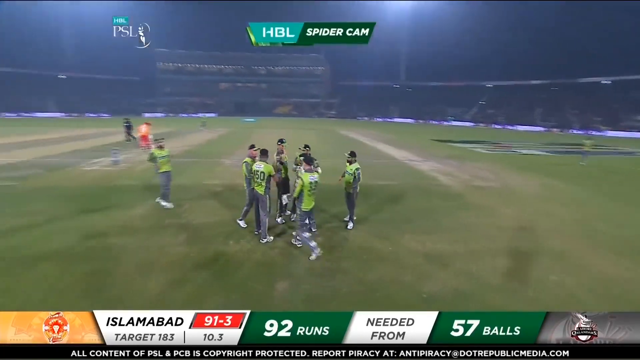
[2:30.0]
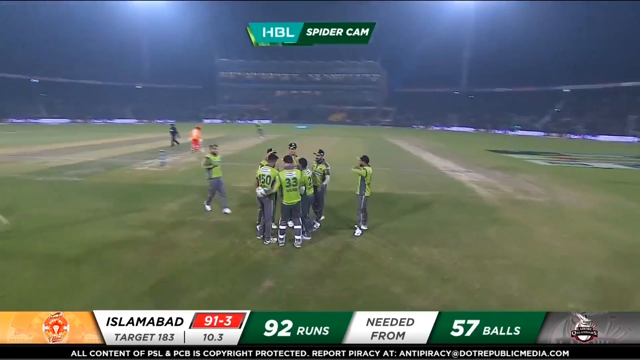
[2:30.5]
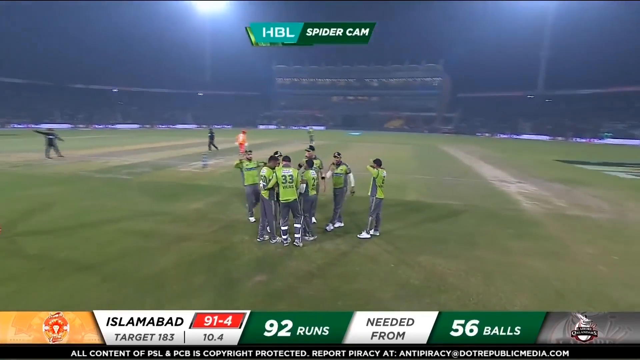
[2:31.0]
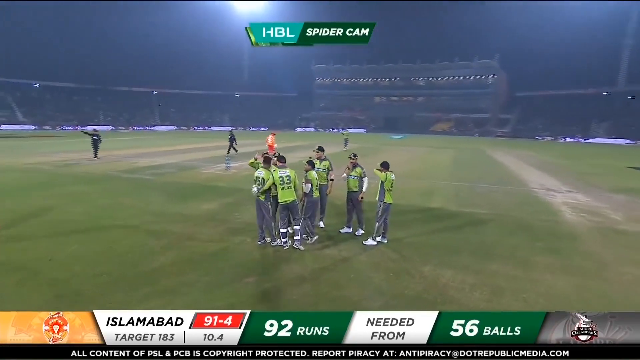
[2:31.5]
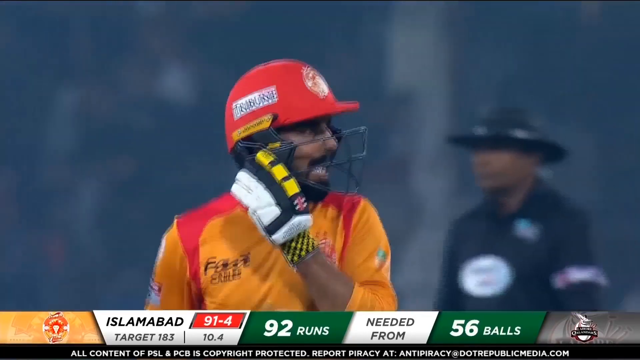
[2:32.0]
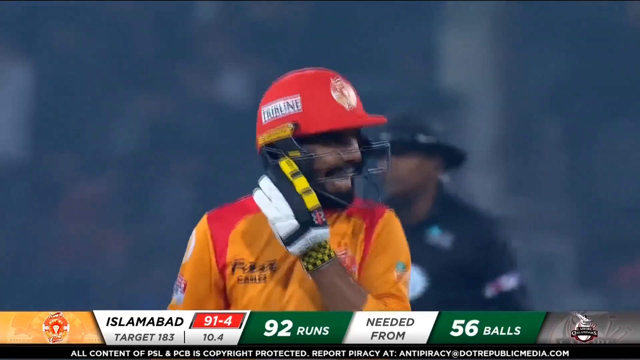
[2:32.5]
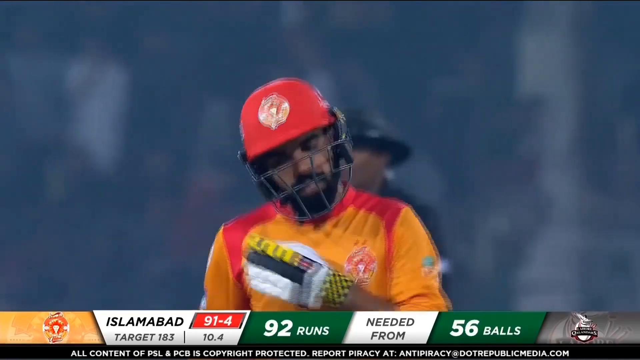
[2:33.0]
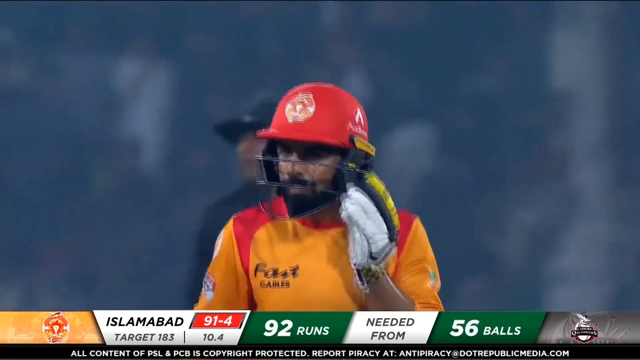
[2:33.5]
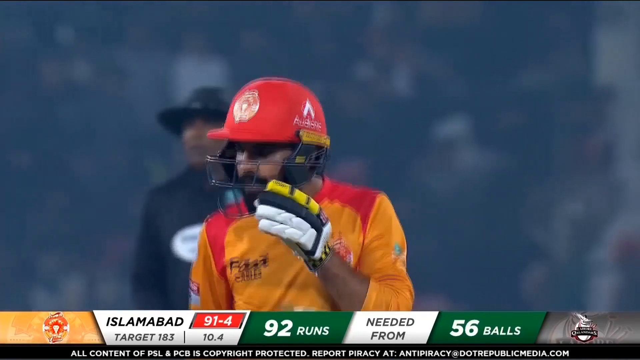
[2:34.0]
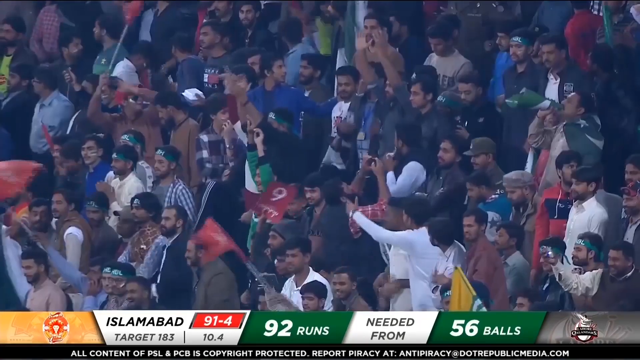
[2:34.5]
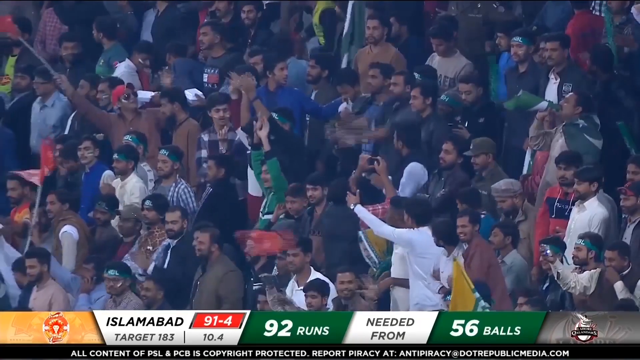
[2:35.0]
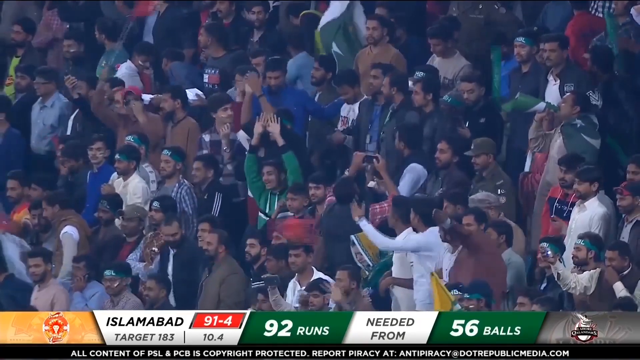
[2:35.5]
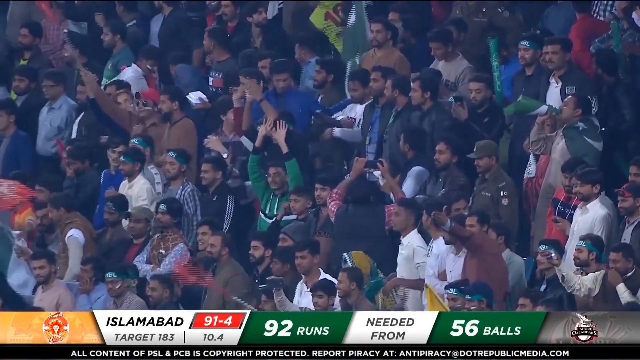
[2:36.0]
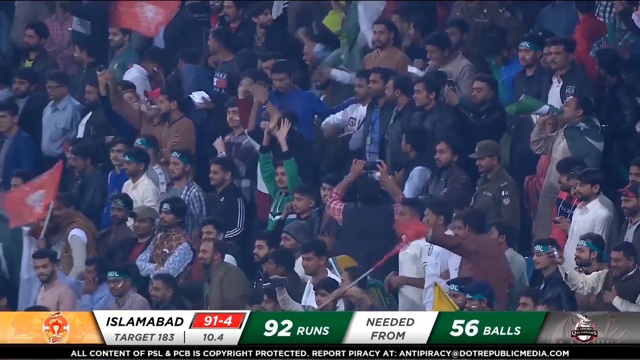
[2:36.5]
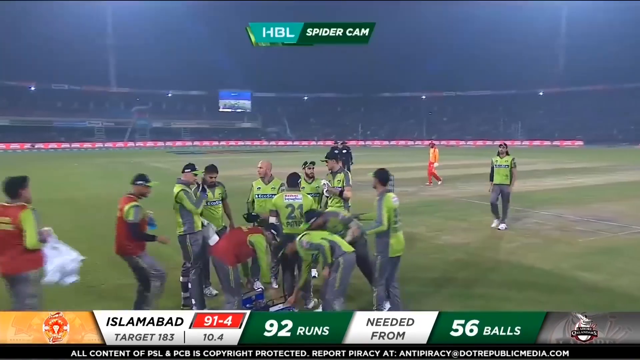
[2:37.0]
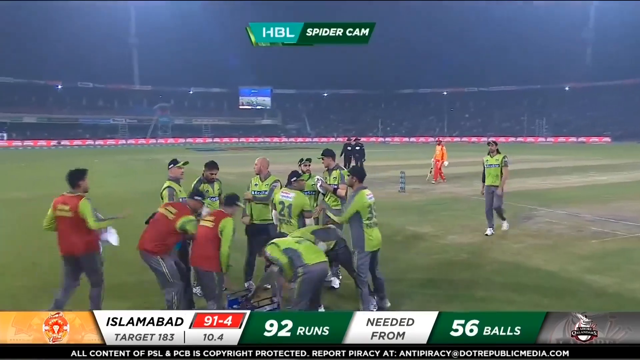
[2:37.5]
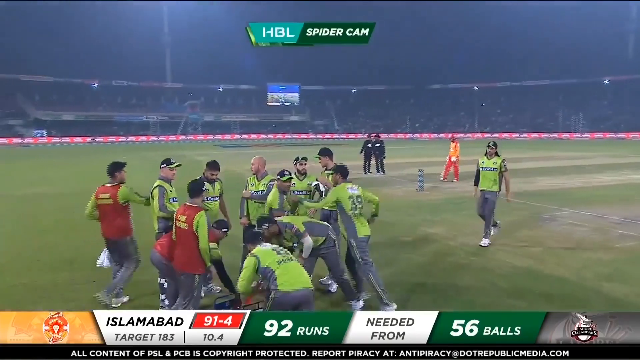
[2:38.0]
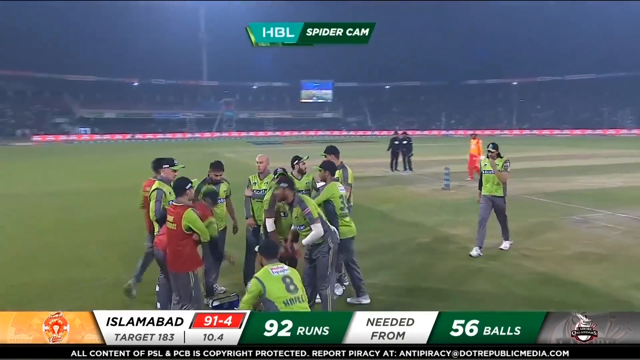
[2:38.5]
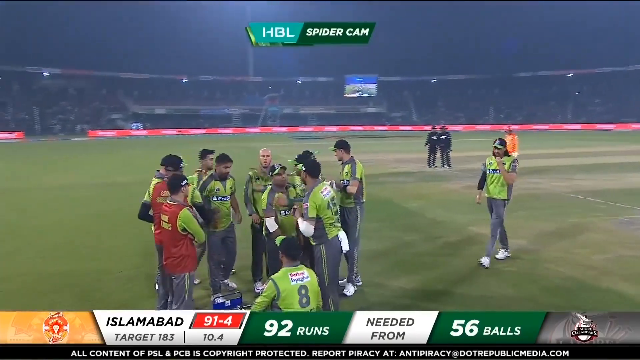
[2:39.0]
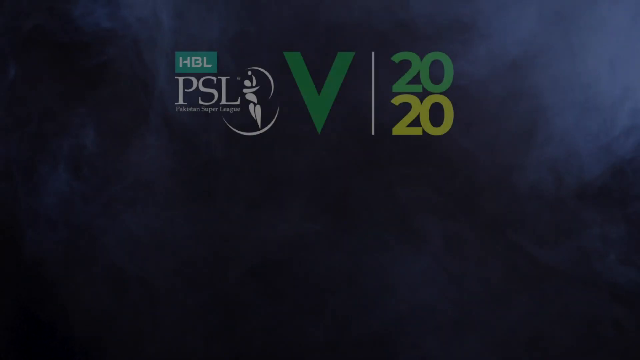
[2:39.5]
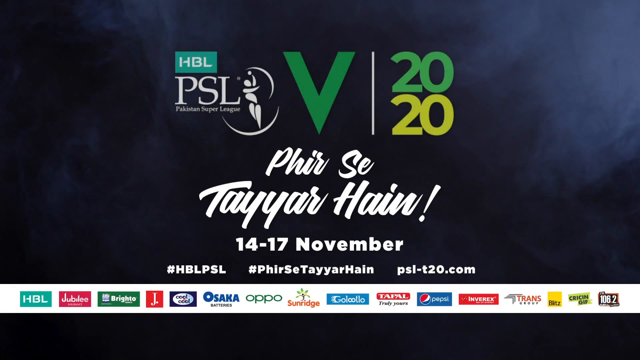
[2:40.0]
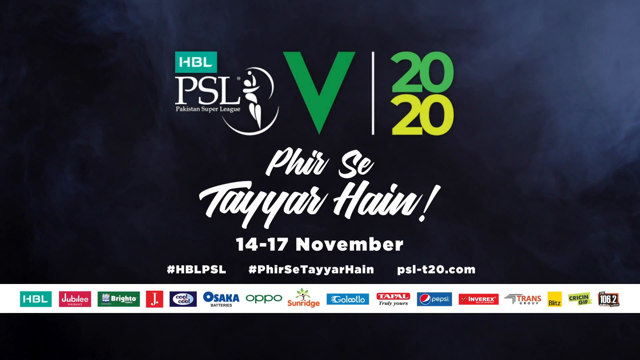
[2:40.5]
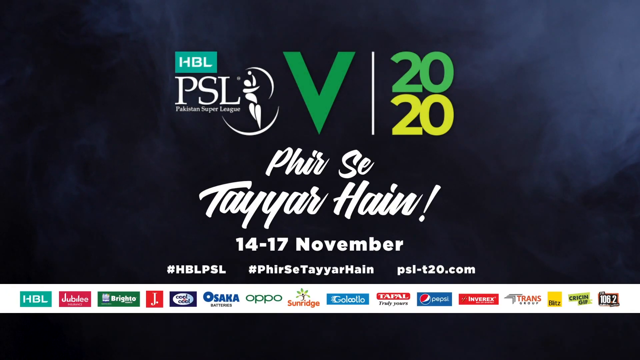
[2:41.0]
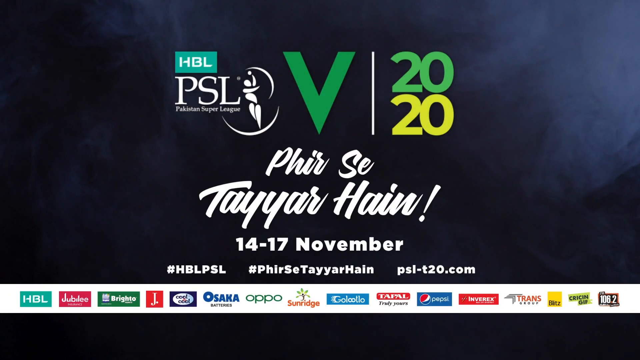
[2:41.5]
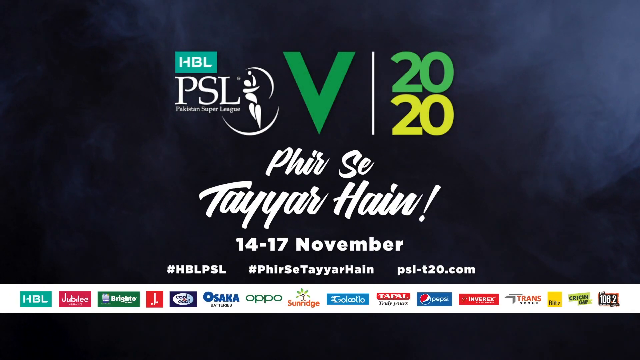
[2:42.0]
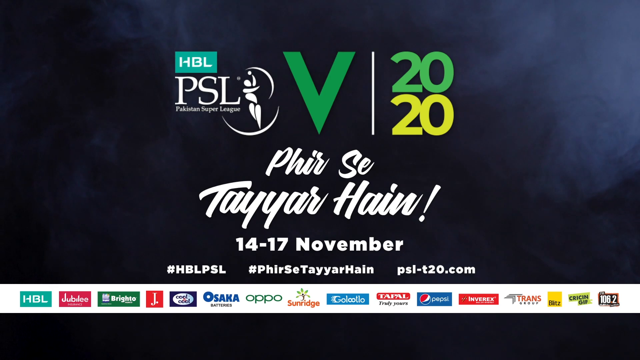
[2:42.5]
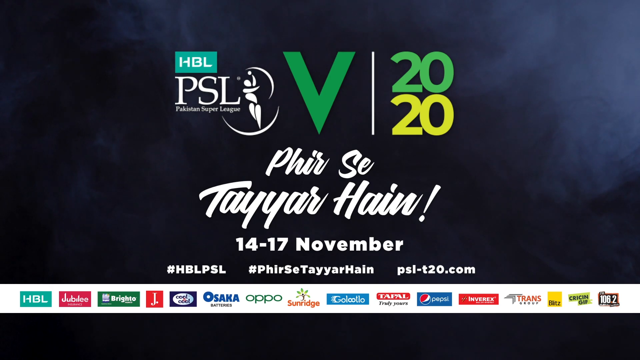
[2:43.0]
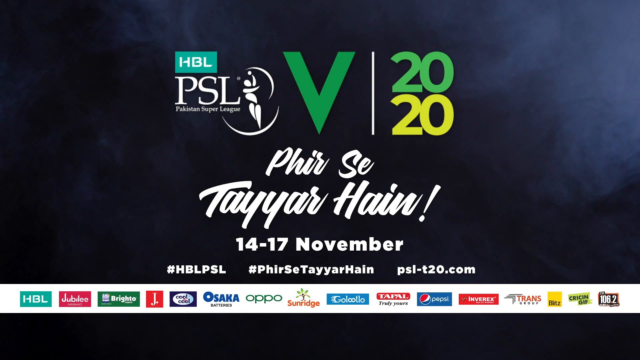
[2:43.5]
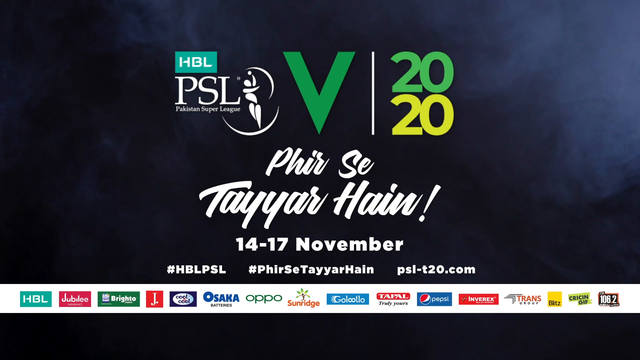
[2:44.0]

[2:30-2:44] The opposition team is again shown celebrating. Islamabad are now 91 for 4. The dismissed batter walks off, taking his helmet off as he goes. The crowd is shown, with green-shirted fans celebrating and waving flags and banners. Substitutes come onto the pitch with drinks for the fielding team. The Pakistan Super League logo appears again, followed by information about a match between the 14th and 17th of November, and then a series of sponsor logos, including HBL, Jubilee, Brighto, J, Cool Cool, Osaka Batteries, Oppo, Sundridge Taipao, Pepsi Cola, Inverettes and a couple of others.